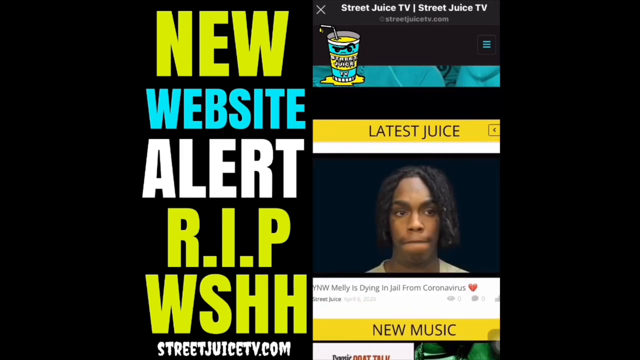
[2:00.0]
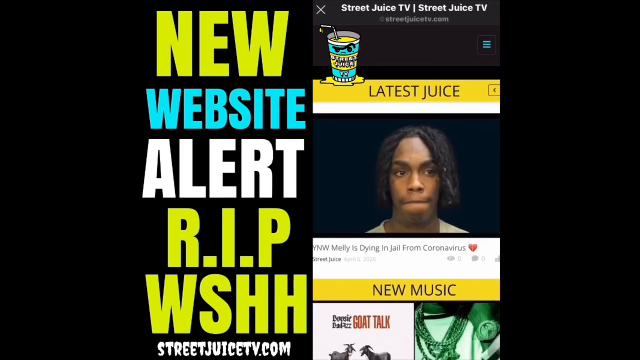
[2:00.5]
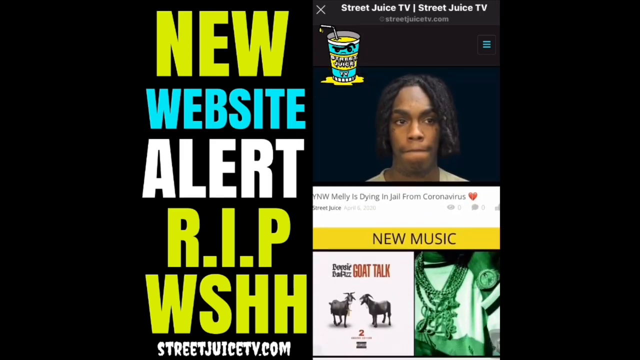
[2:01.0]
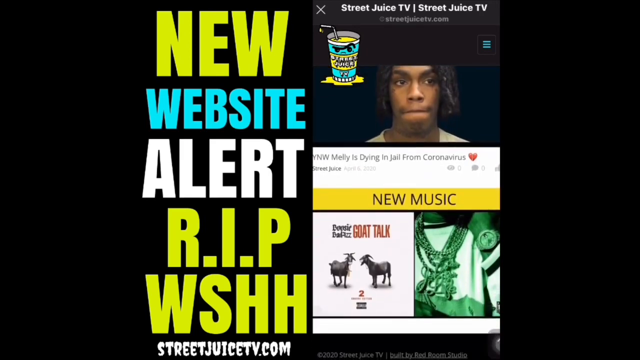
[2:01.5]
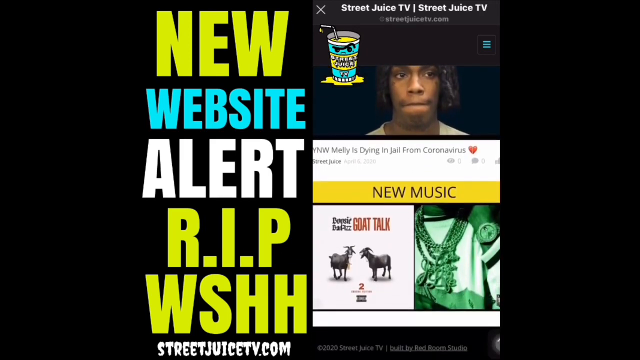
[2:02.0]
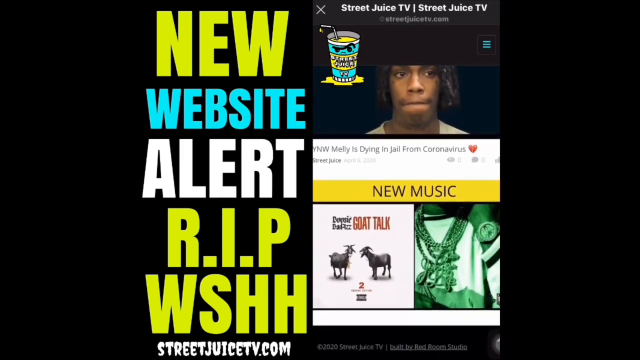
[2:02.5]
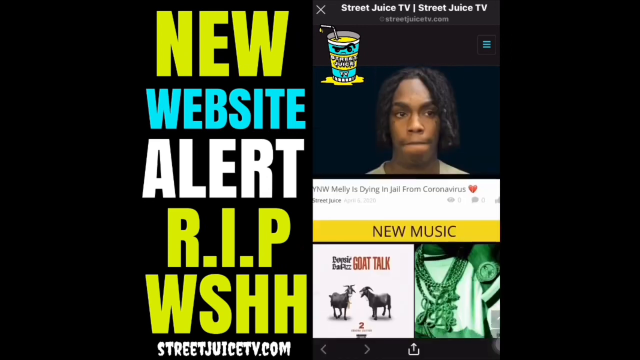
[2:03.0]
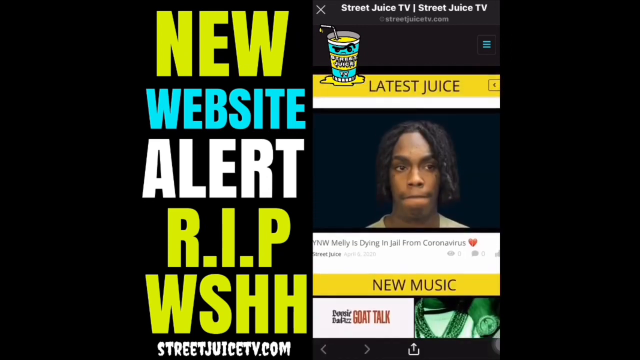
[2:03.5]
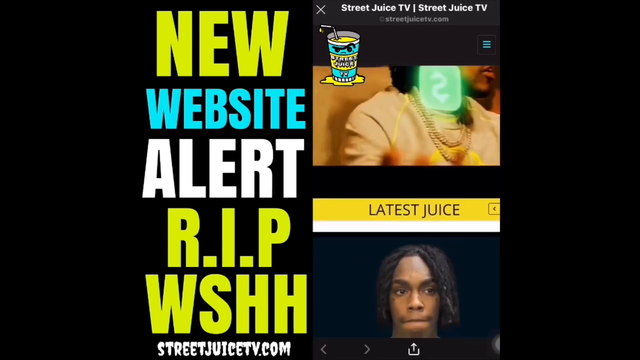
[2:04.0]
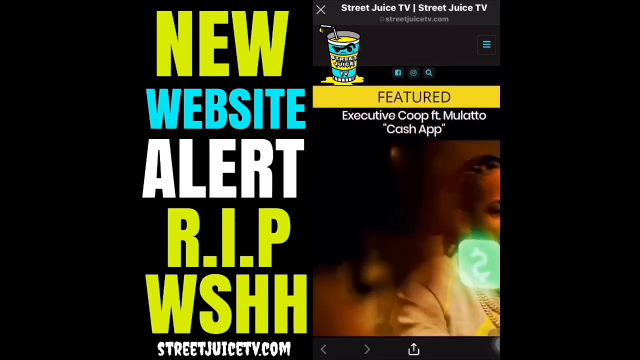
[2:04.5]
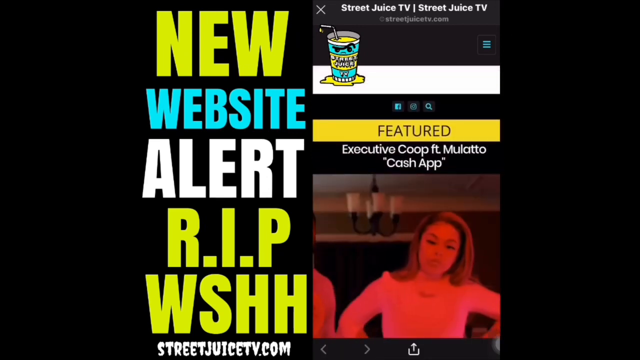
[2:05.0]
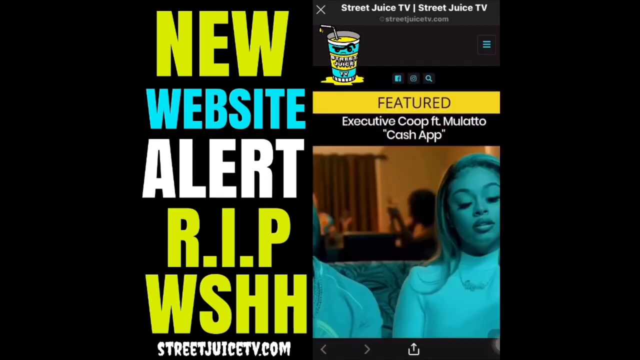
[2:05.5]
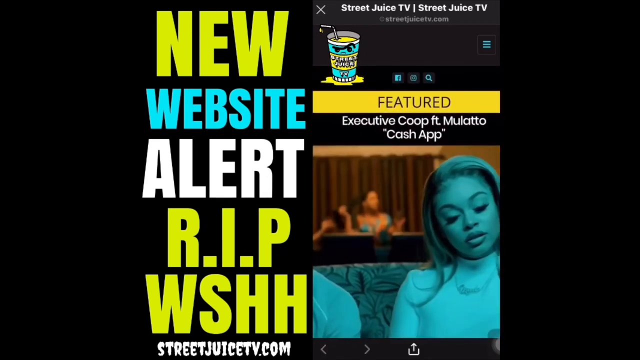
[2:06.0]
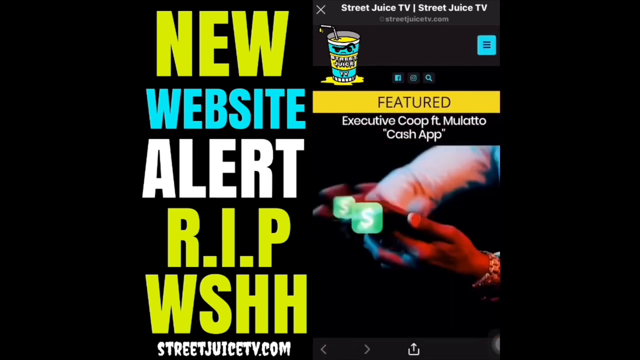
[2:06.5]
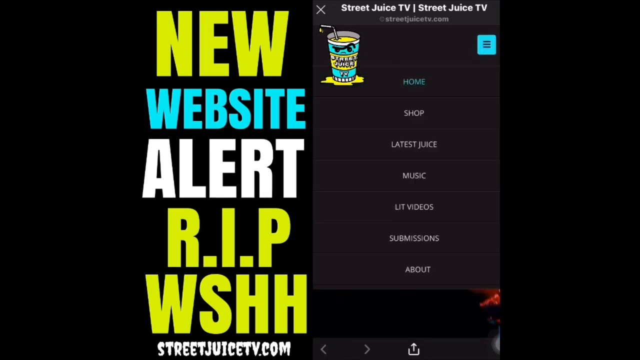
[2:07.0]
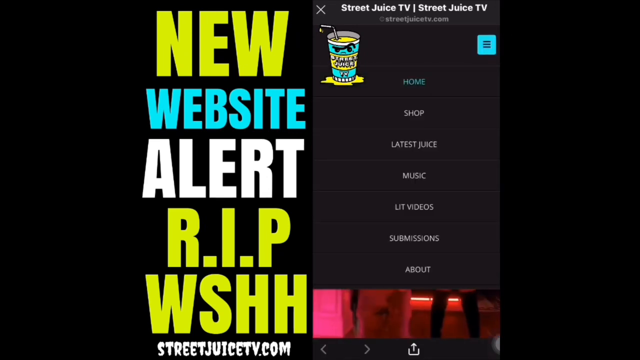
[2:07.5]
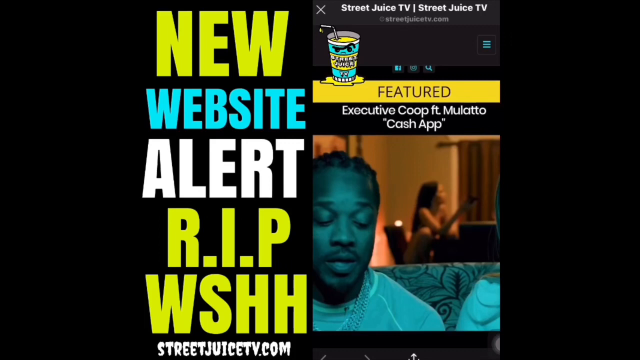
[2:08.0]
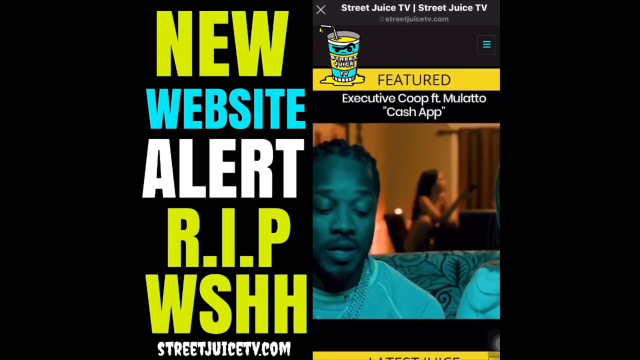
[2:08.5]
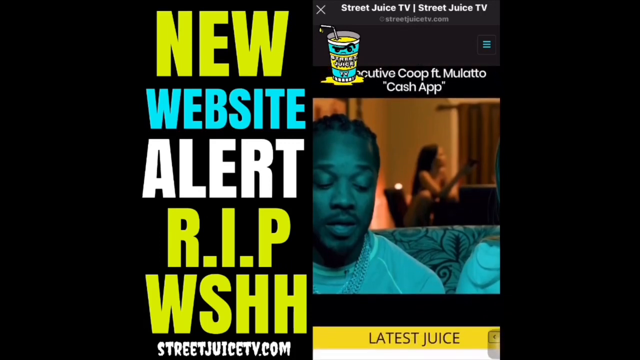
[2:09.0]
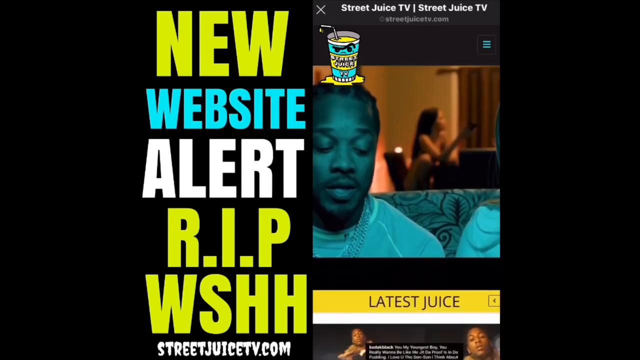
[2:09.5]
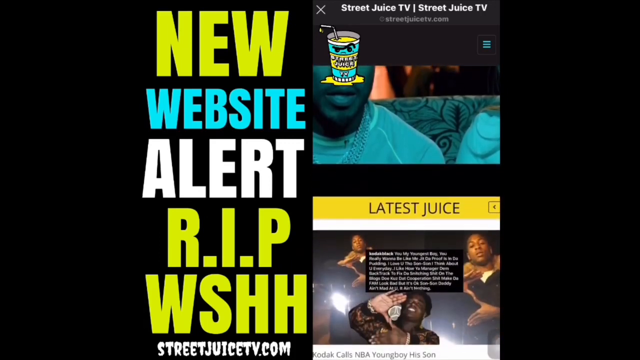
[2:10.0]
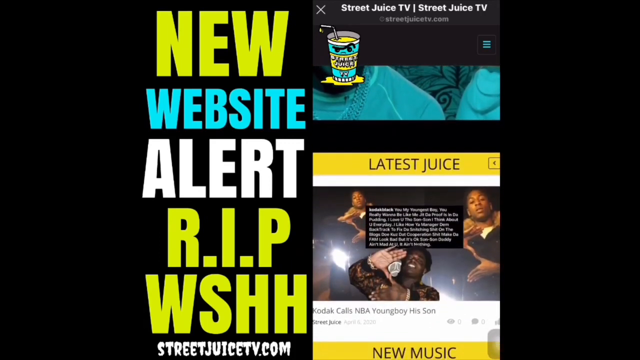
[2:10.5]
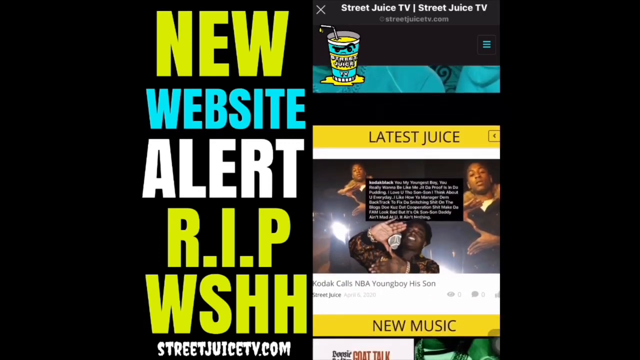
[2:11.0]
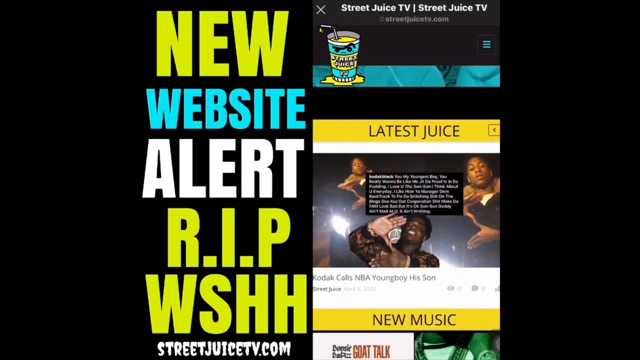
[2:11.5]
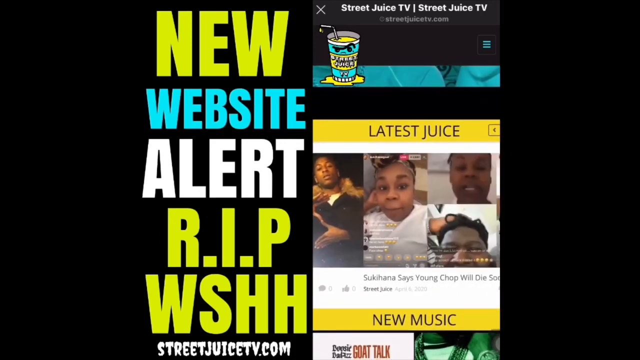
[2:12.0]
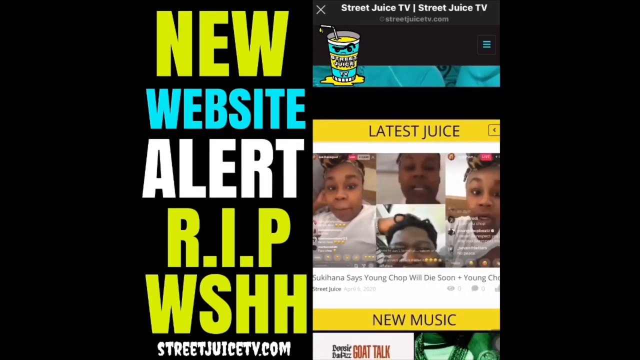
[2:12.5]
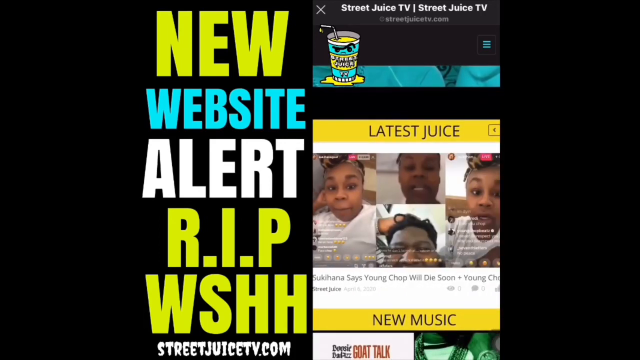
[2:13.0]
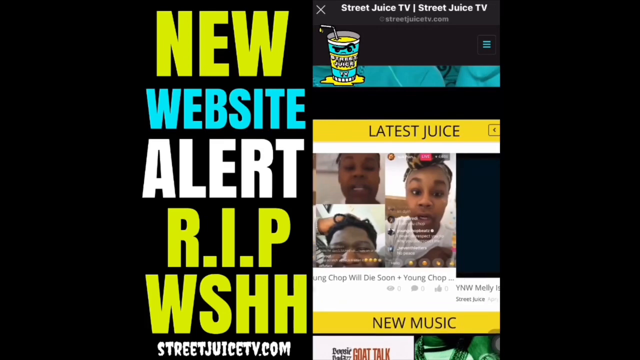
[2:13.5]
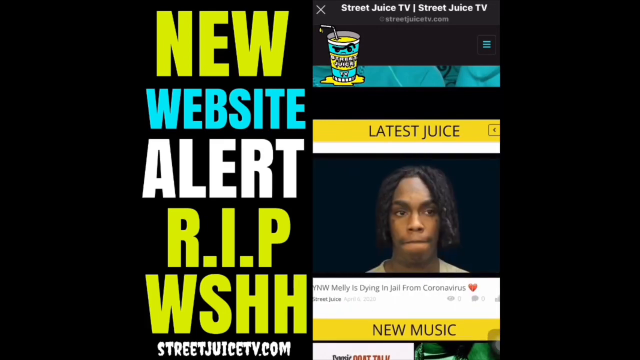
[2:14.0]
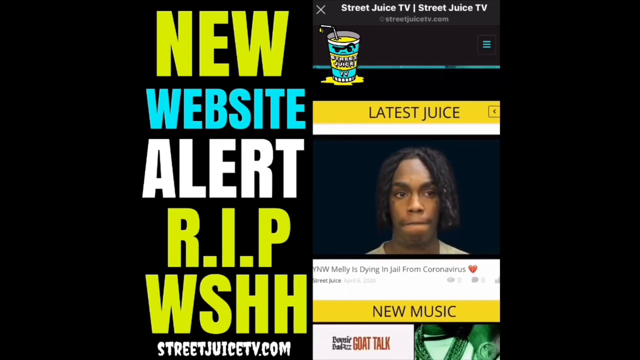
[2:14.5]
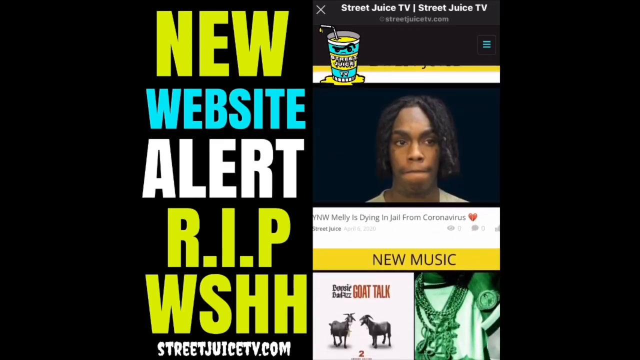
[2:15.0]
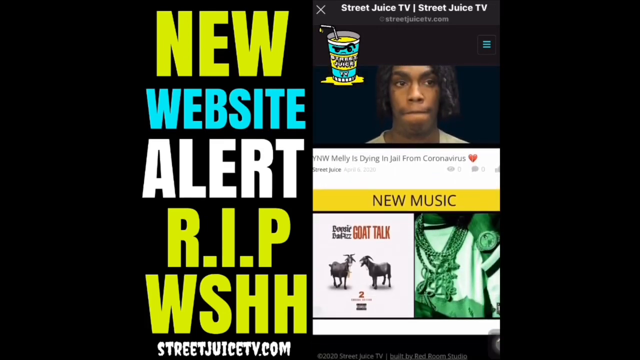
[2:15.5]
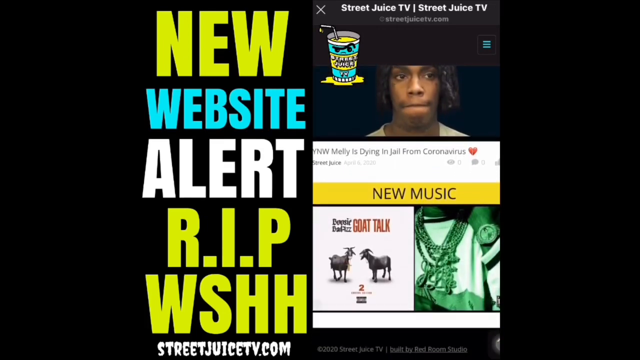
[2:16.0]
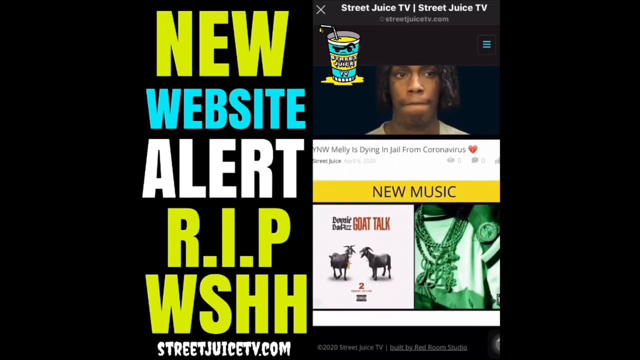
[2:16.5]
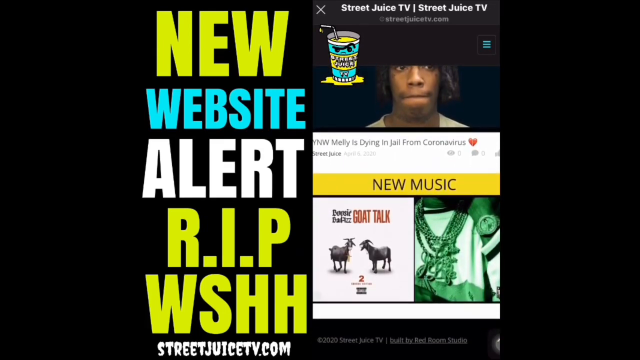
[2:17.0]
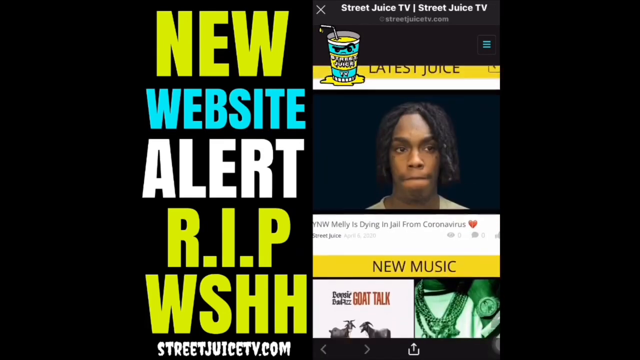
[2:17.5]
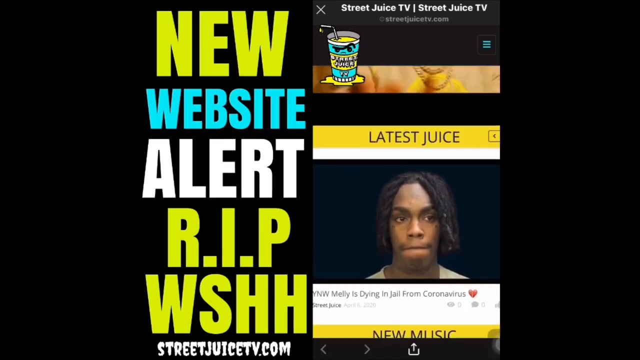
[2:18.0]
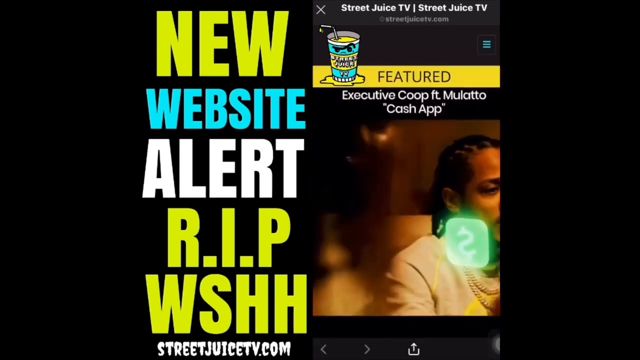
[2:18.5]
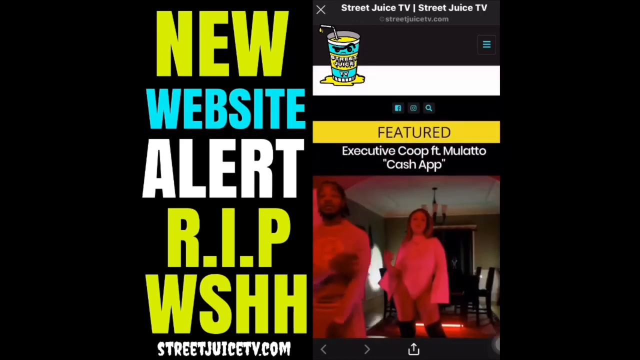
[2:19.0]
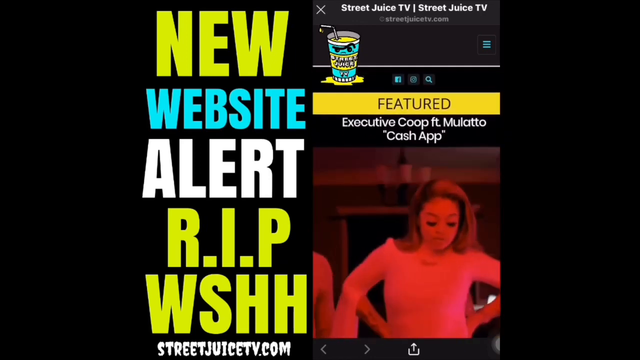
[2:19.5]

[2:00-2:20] The split screen with the black background continues, with the same text on the left and what looks like a screen recording of a web browser on the right. The page scrolls slowly down, then back up, showing a featured video, "Executive Coop, ft. Mulatto", with "Cash App" in quotes. A menu in the top right is clicked, listing options such as Home, Shop, LatestJuice, Music, Lit Videos, Submissions, and About, and is then clicked off. The page scrolls back down to Latest Juice, scrolls to the left to show a few different items that may be videos, then scrolls further down to show examples of new music. It scrolls back up to the featured video and settles in that area after scrolling up and down a few times.